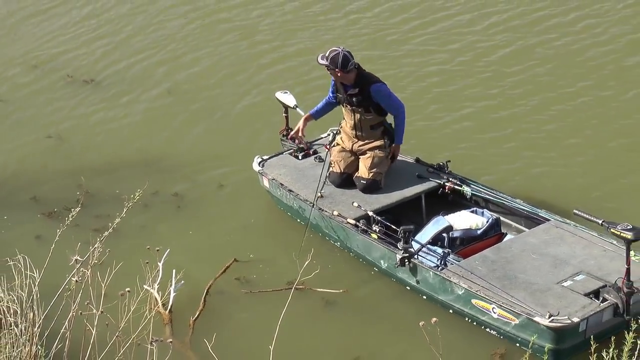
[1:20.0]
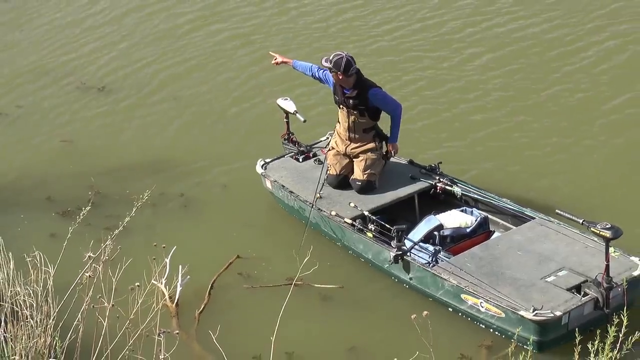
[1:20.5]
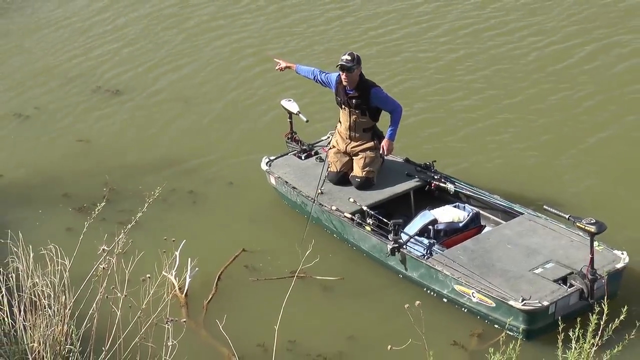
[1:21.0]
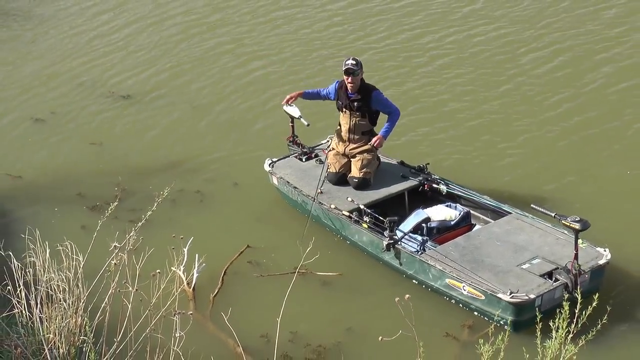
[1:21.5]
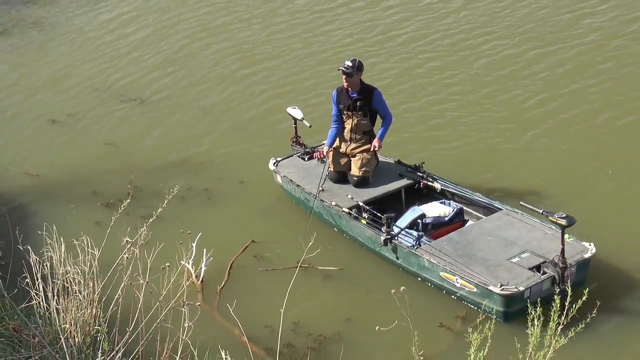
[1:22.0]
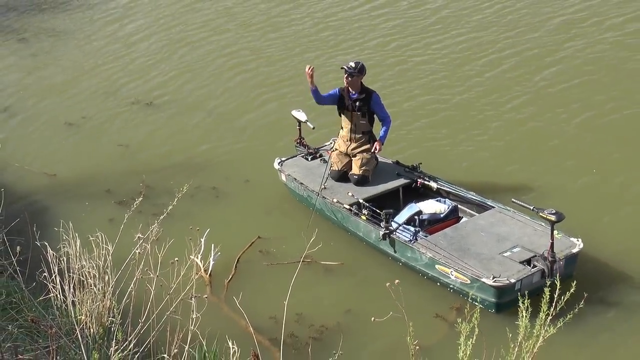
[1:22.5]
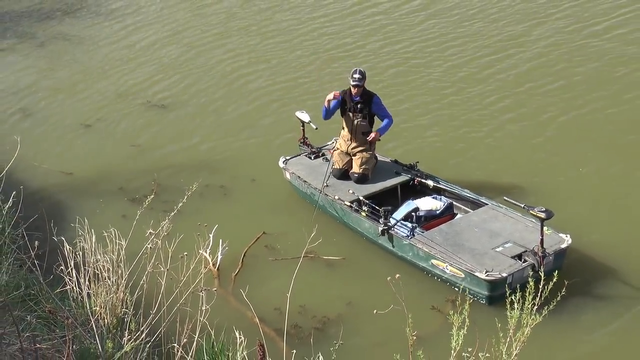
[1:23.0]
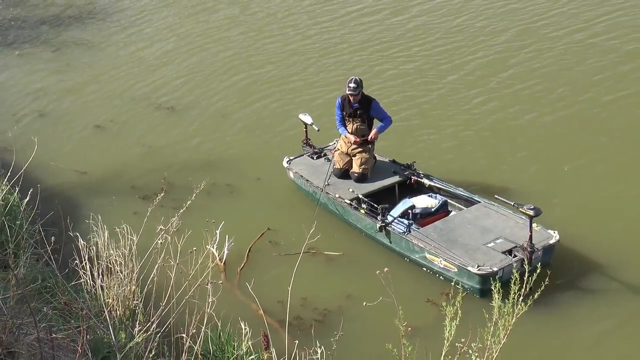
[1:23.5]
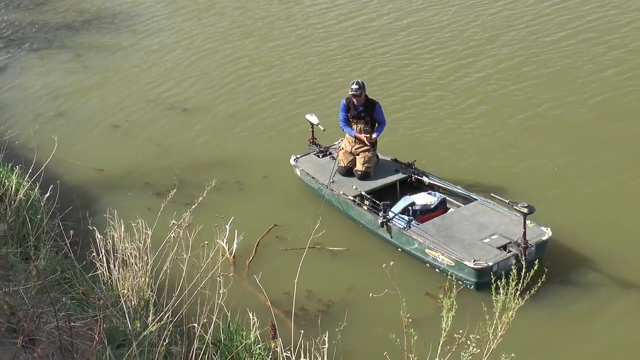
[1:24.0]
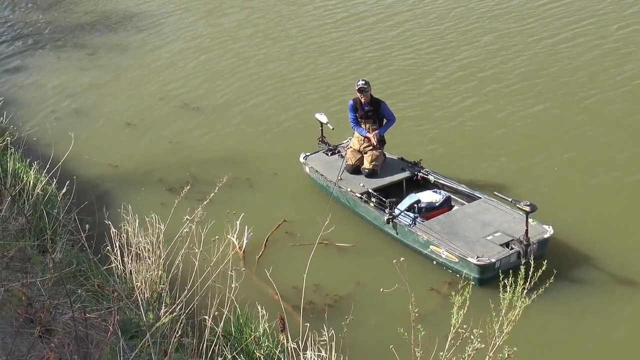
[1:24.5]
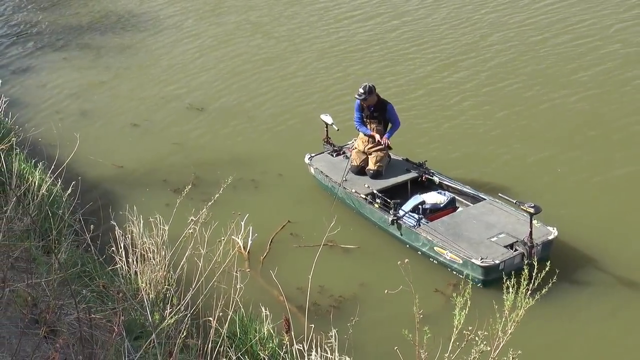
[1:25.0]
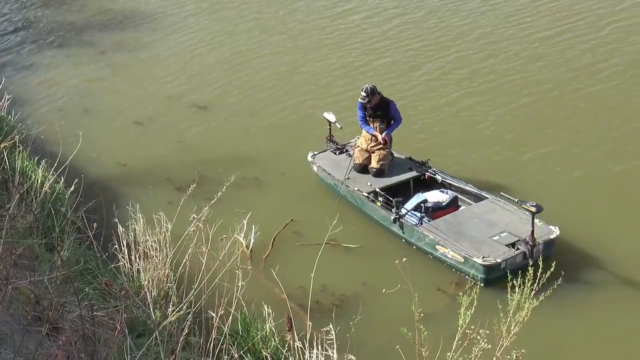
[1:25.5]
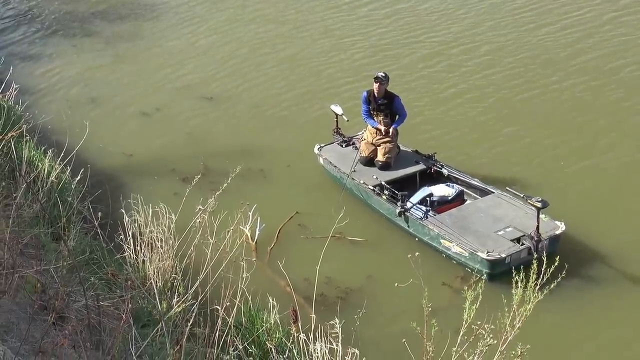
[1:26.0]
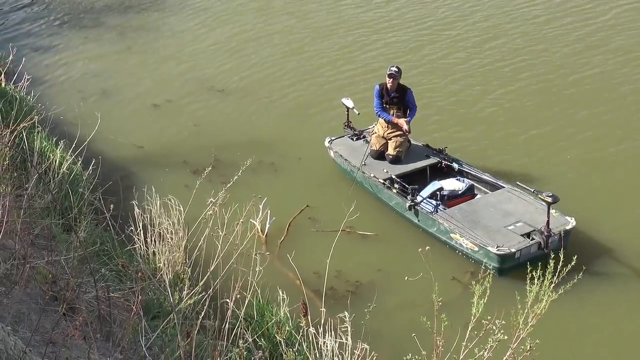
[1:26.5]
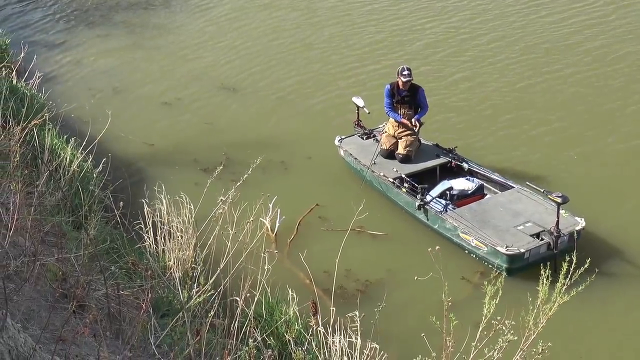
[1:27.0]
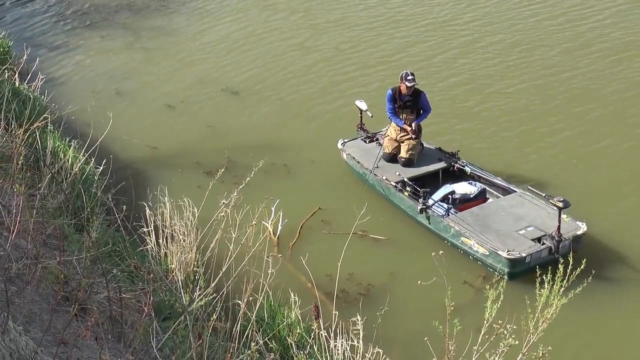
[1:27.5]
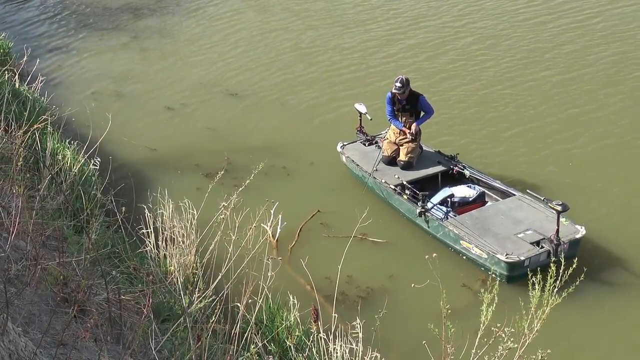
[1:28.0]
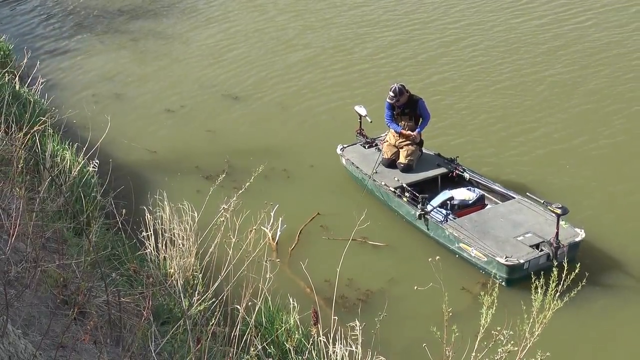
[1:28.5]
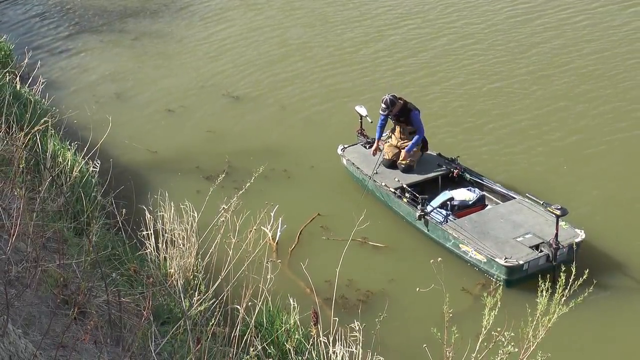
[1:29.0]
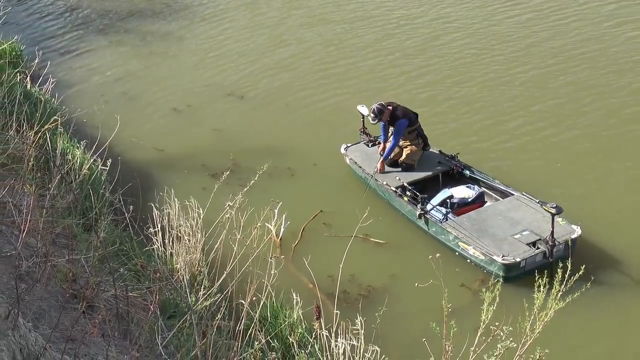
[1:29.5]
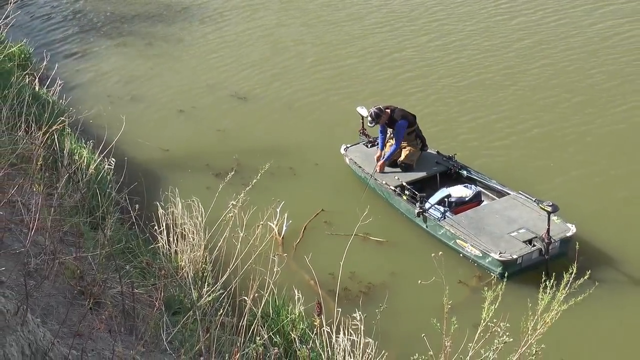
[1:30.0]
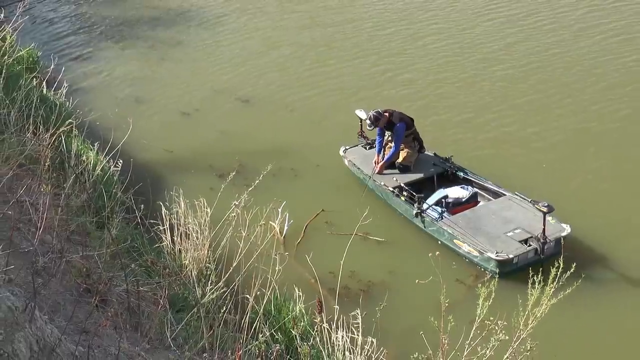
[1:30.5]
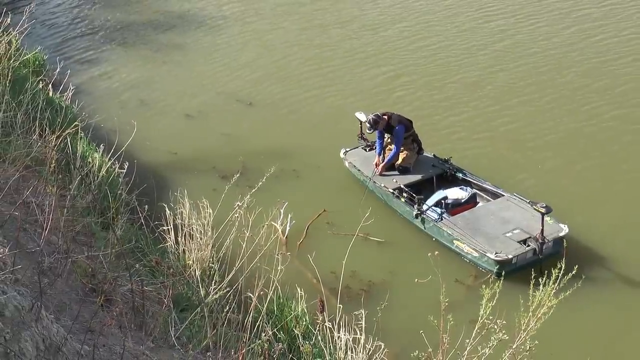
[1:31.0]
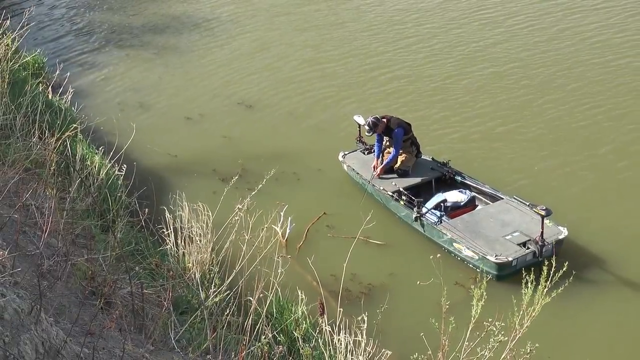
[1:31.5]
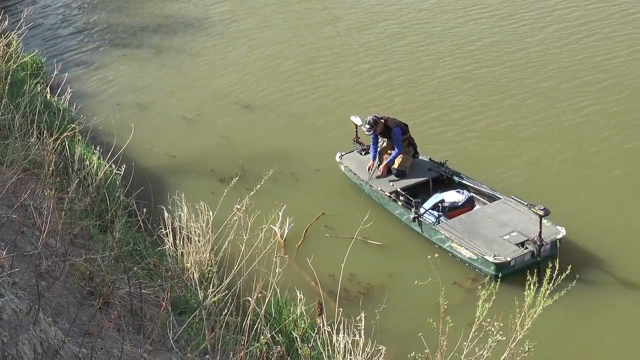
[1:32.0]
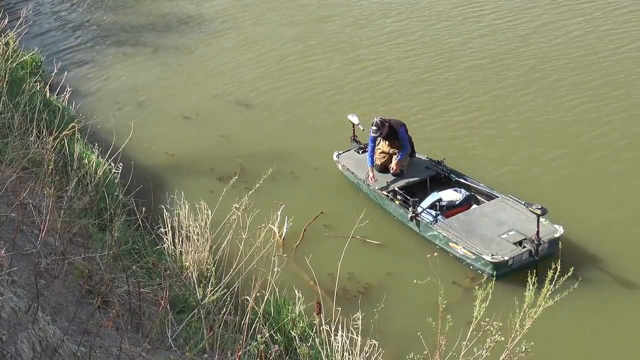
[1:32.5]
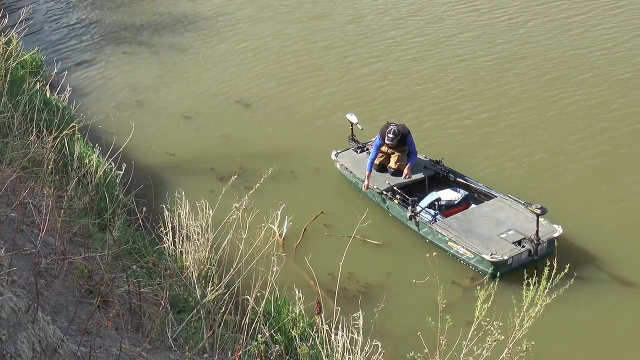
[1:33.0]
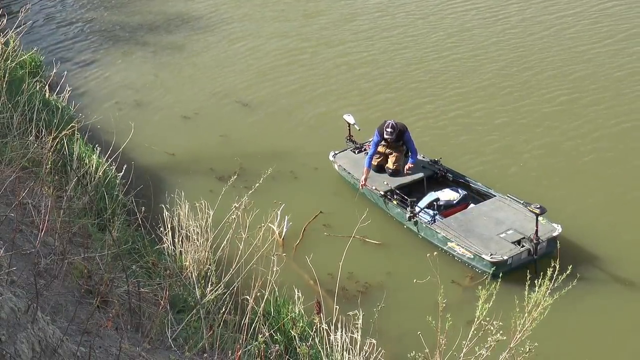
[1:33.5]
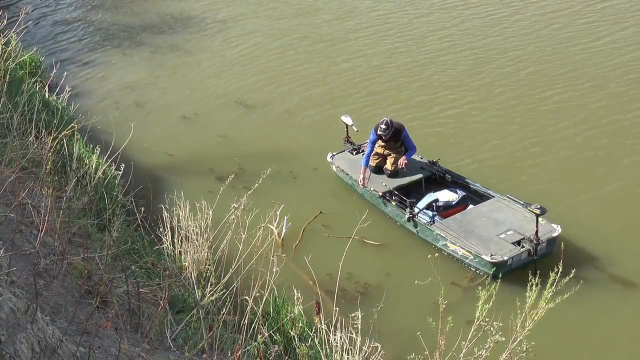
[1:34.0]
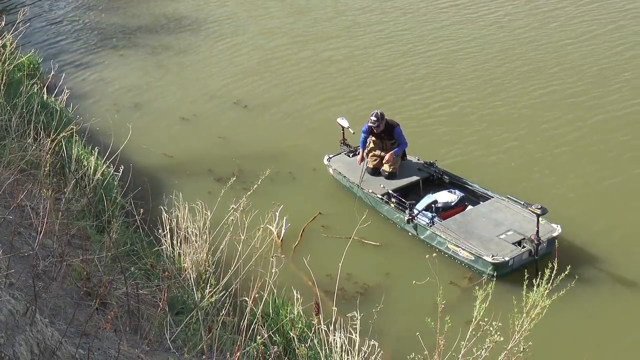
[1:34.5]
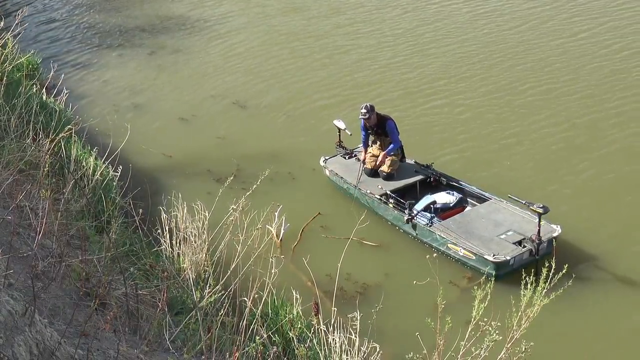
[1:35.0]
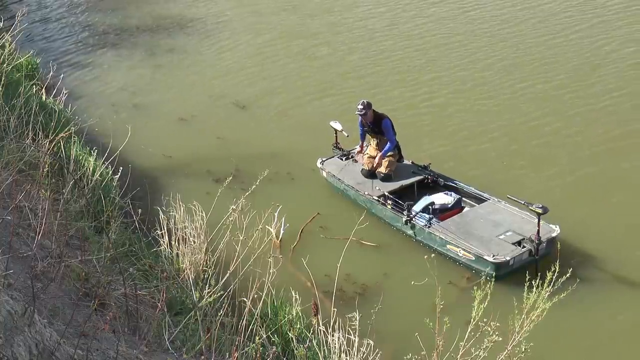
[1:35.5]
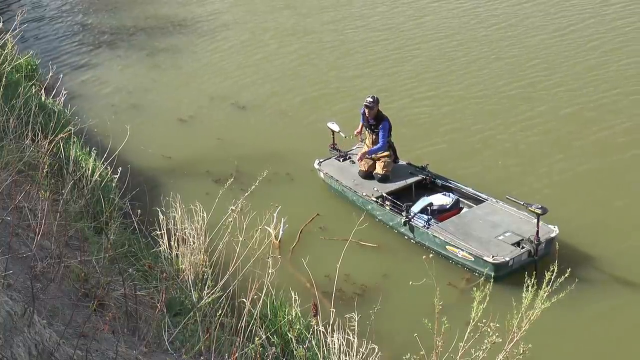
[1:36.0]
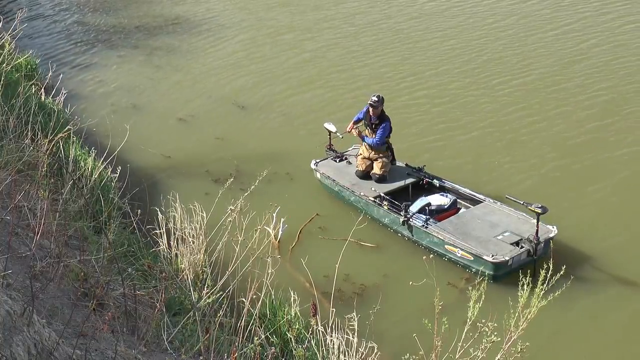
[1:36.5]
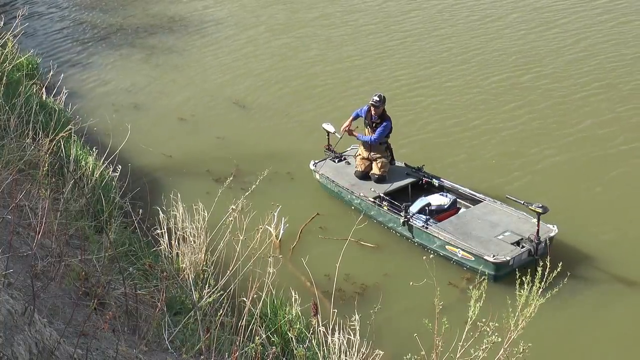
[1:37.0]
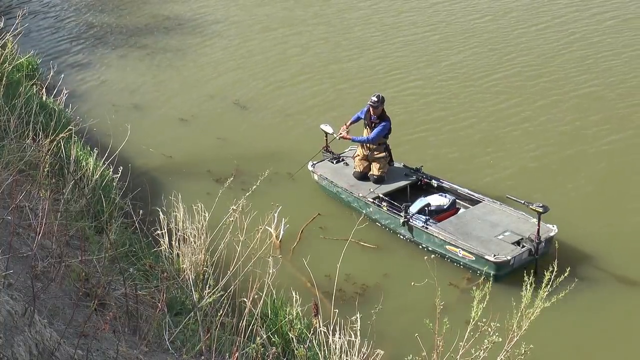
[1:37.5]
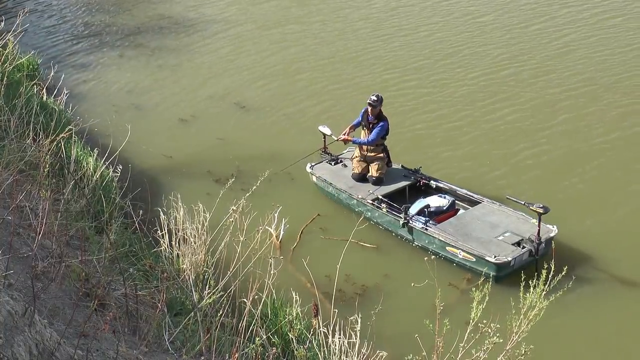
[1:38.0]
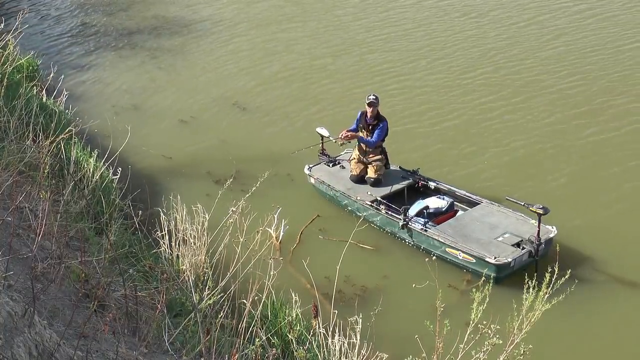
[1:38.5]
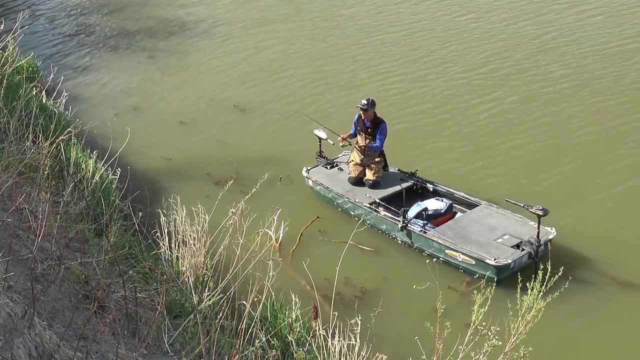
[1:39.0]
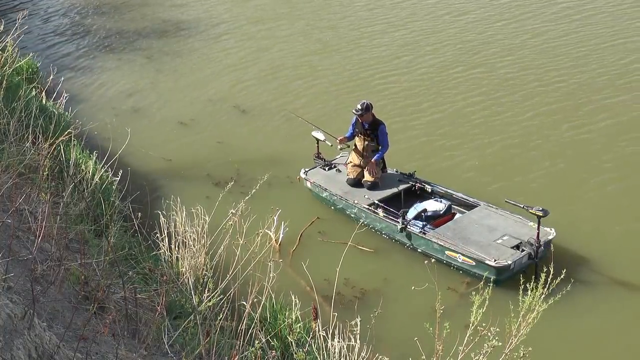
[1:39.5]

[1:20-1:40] The fisherman points at his fish, seemingly talking, then points up to the sky in an unclear gesture as the camera pans way back. The view is now from high above him and to his left, apparently from a distance with a telephoto lens zoomed in on him. He appears to give a little commentary, shakes off his hands, points out to his right, then sticks his hand up toward the clouds. He then cleans off the deck of the gray john boat and handles the fishing pole and line, apparently getting ready to try again.